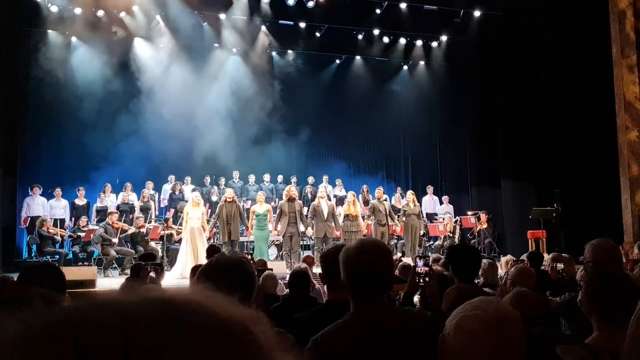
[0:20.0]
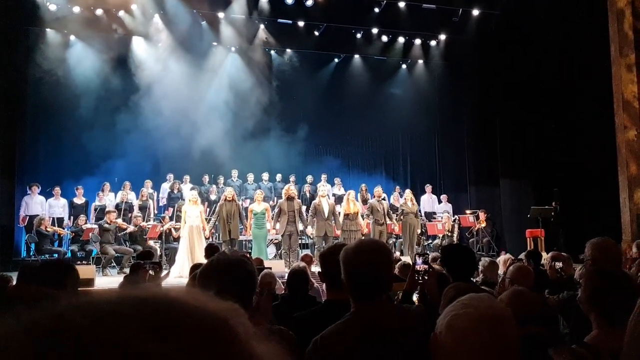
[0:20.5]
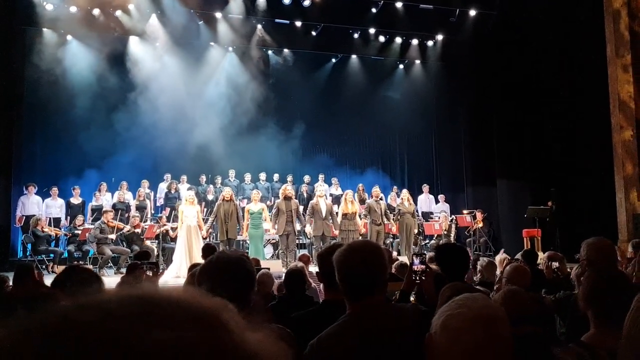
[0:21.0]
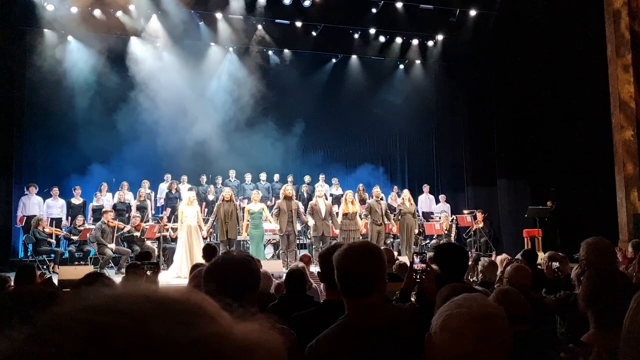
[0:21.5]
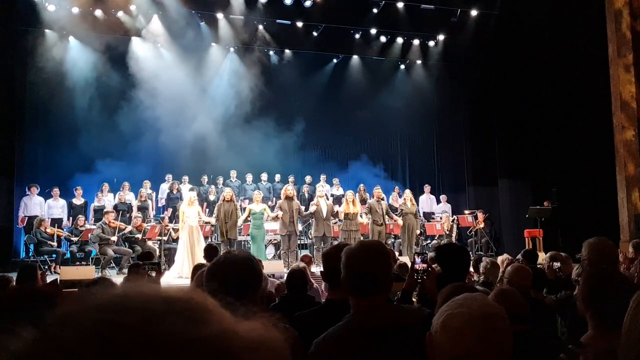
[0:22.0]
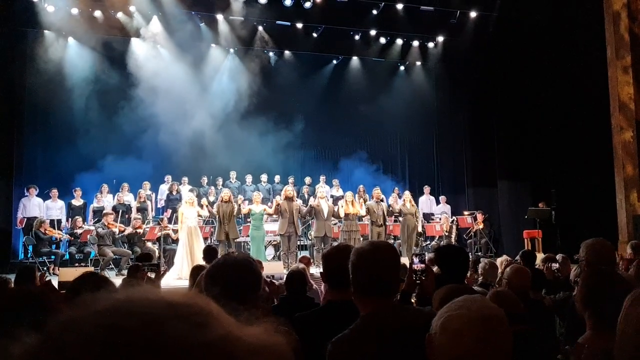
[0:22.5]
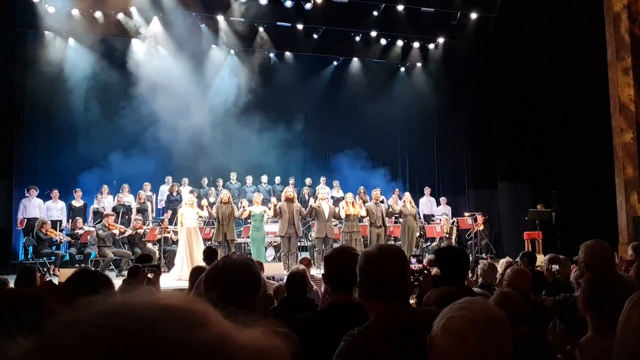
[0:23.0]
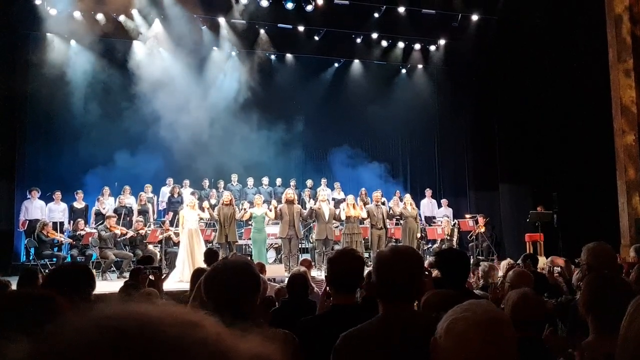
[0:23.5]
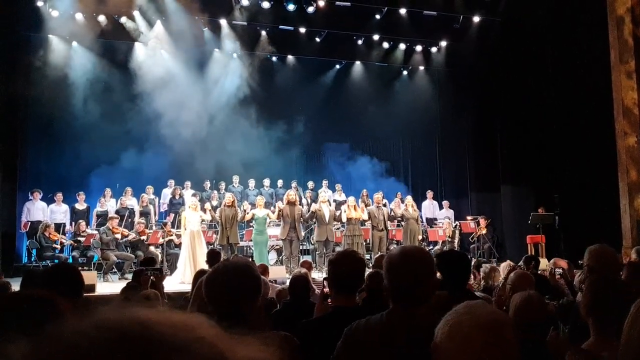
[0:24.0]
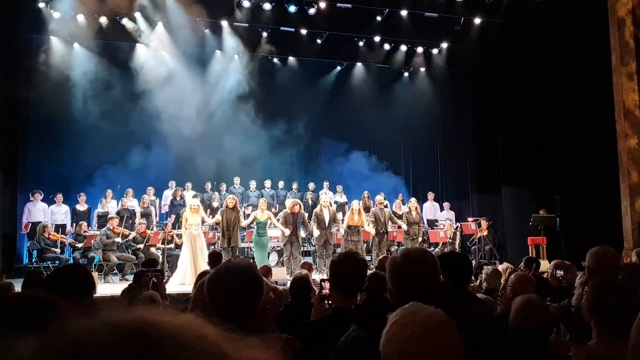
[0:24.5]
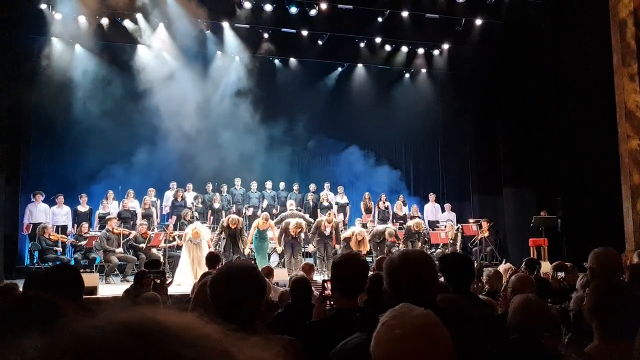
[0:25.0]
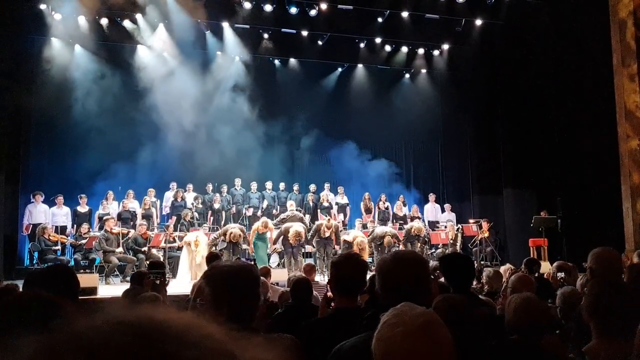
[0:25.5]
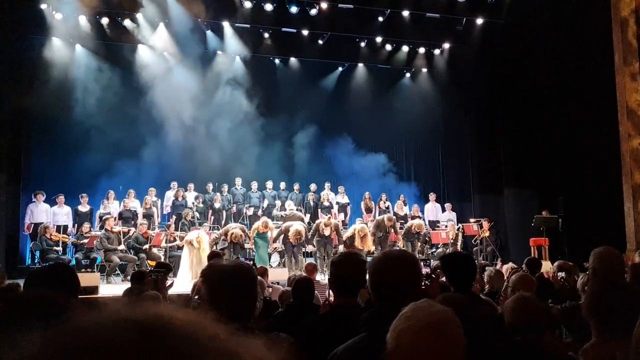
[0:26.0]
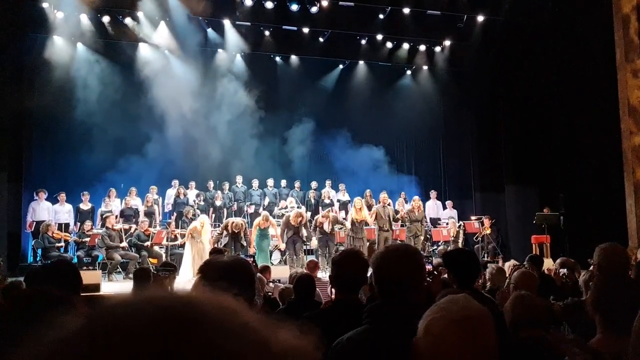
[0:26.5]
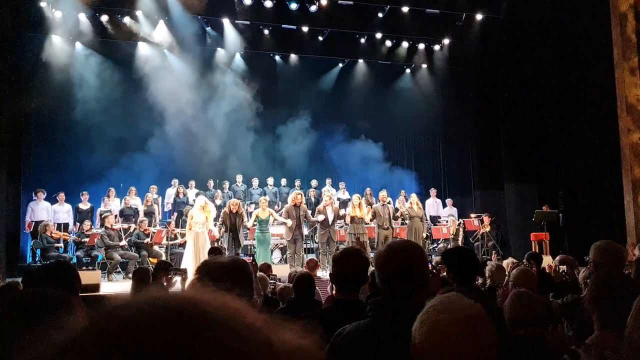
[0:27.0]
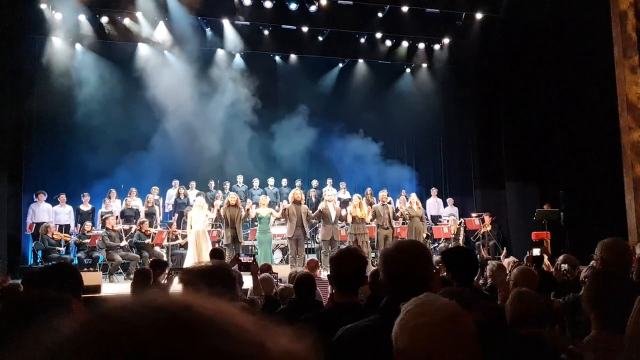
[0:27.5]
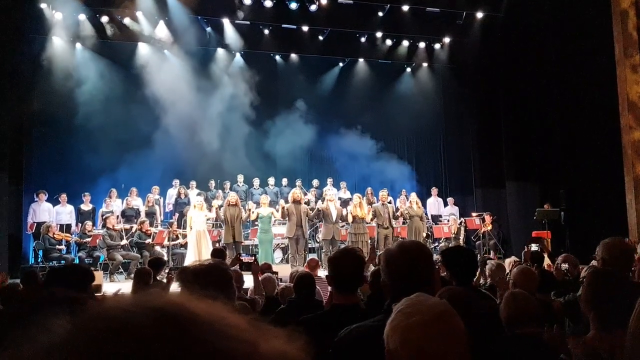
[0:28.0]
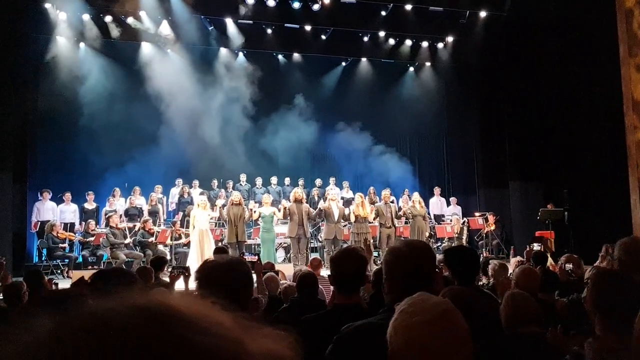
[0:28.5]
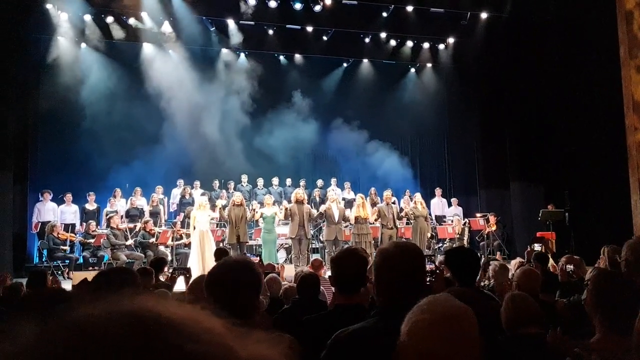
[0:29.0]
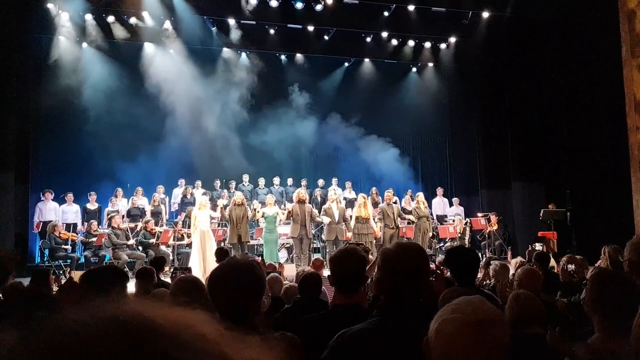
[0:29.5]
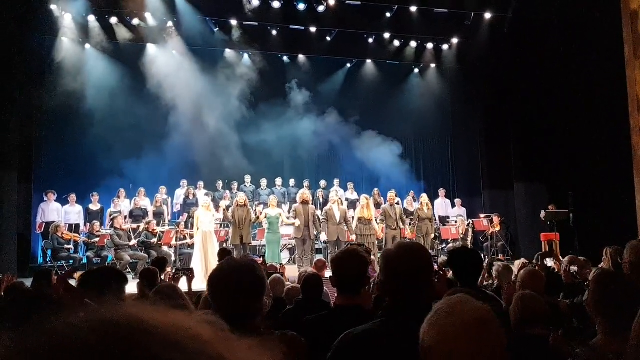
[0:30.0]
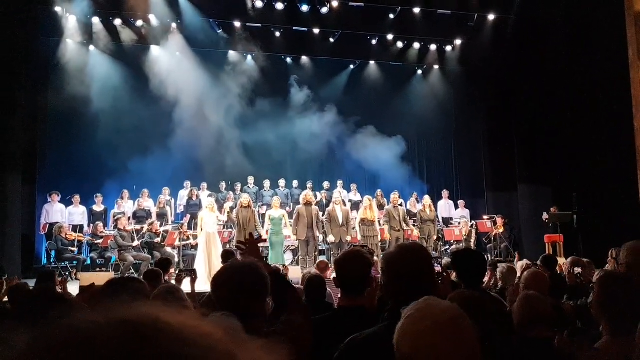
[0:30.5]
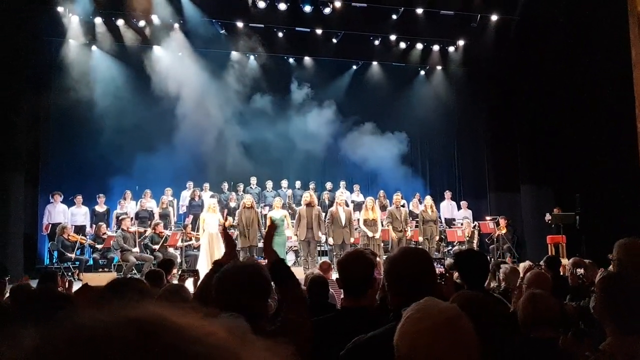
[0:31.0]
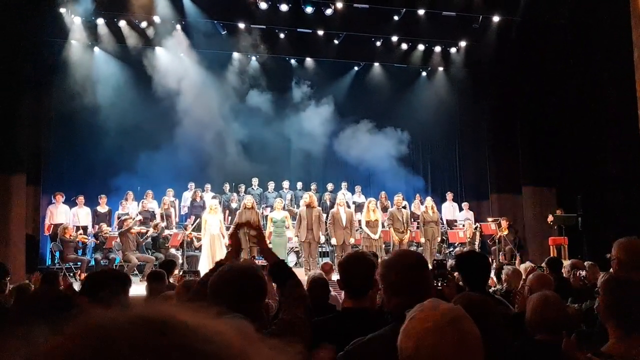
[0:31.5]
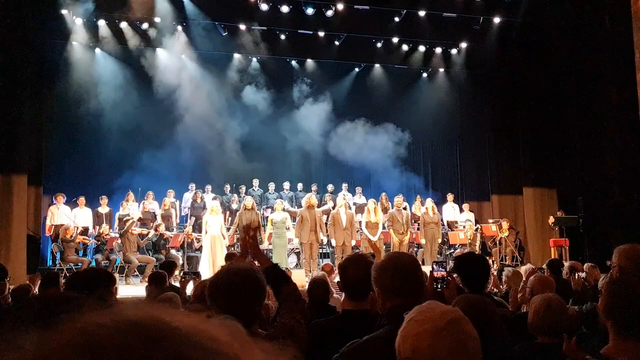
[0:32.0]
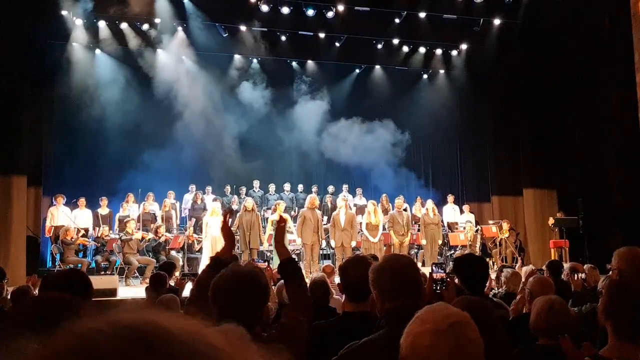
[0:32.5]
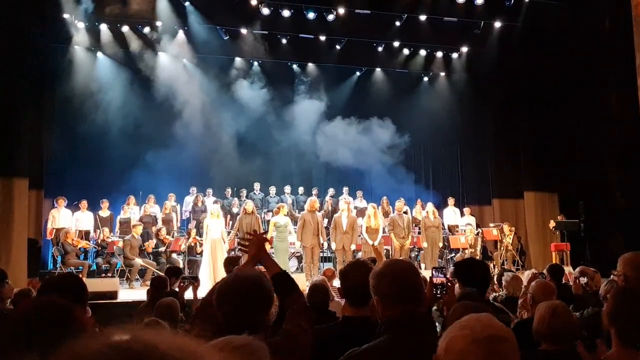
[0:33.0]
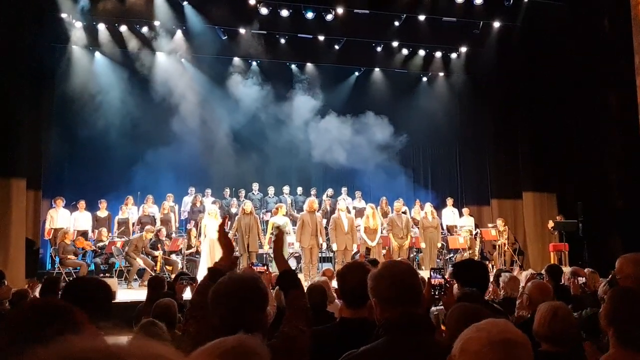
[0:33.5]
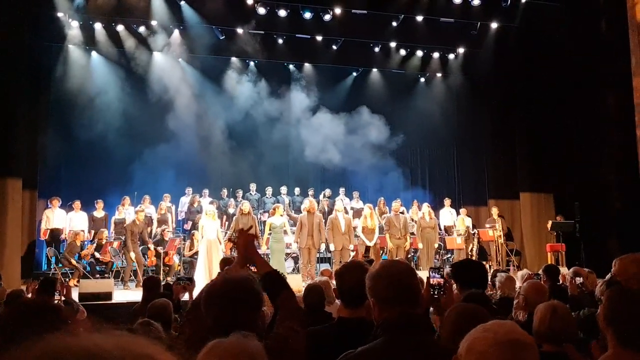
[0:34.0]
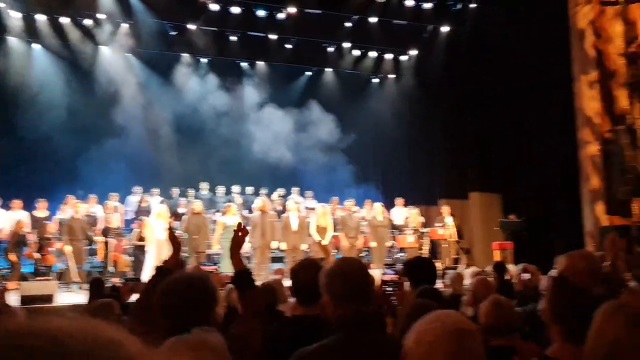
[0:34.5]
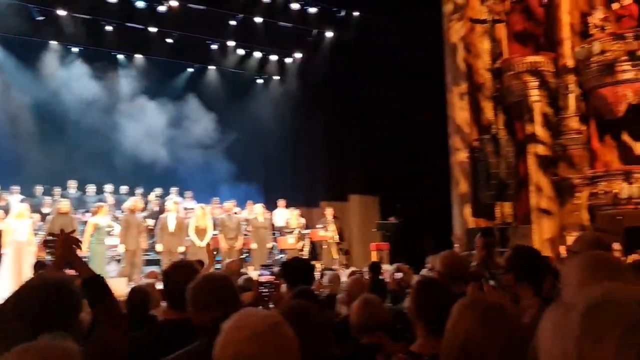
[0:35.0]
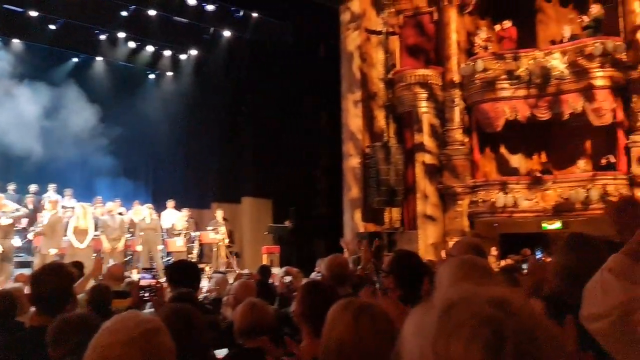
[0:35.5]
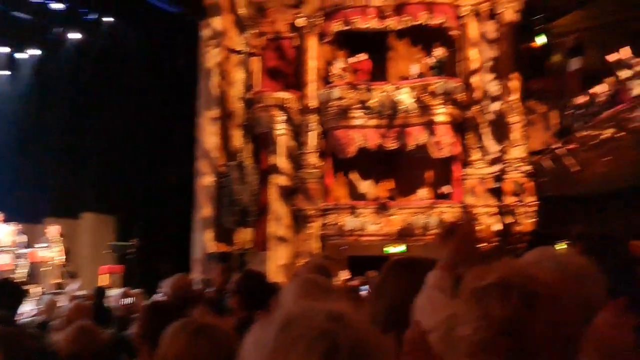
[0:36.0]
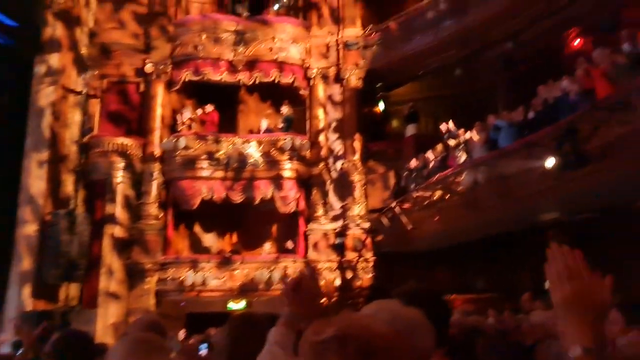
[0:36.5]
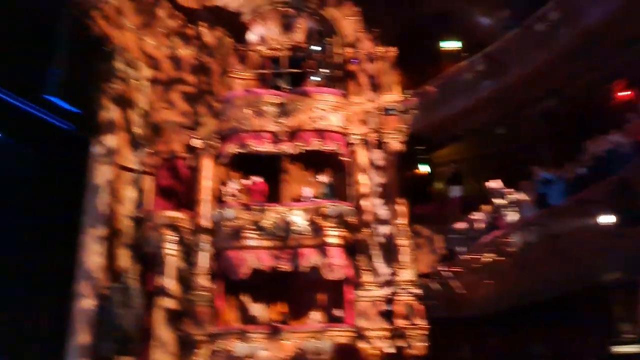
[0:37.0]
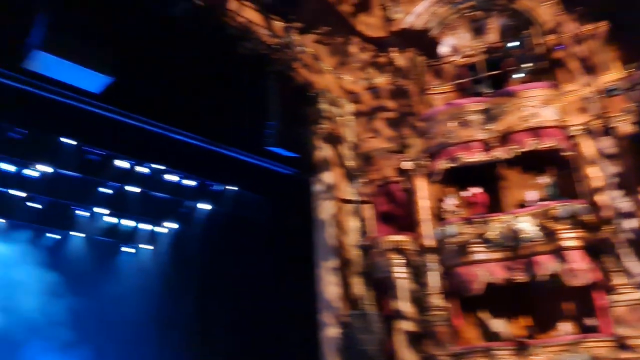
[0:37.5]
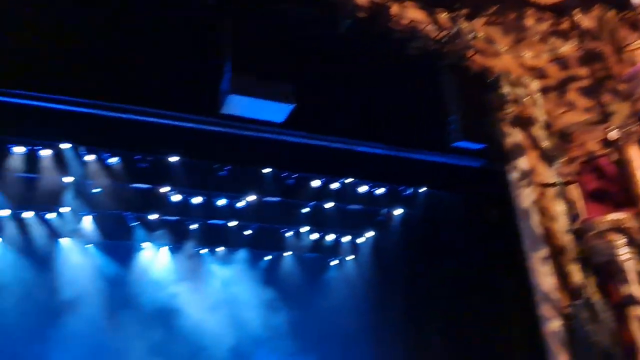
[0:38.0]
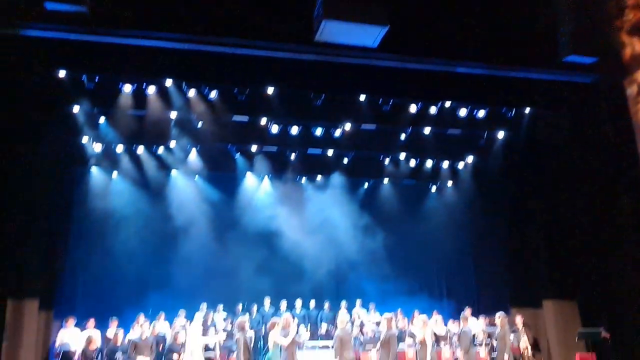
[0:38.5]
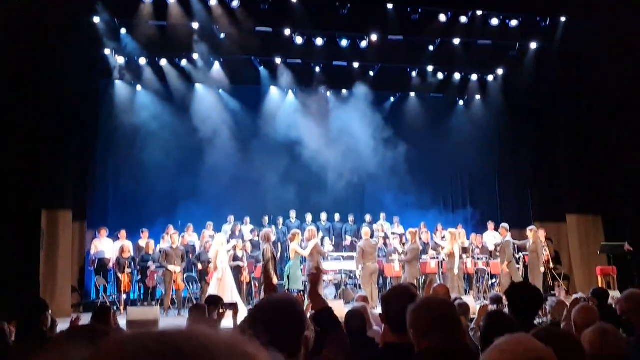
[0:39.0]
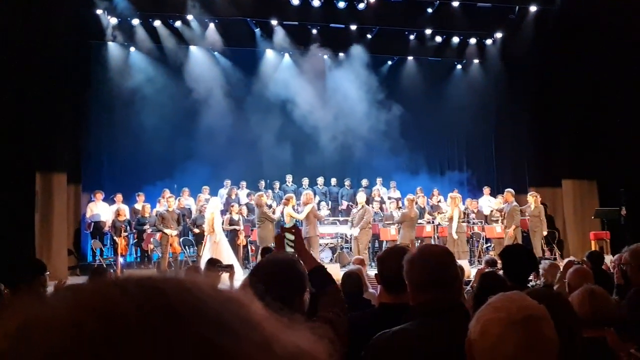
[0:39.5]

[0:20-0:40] The audience claps passionately, with hands raised in the air as they clap. The people appear to be seated, apparently not giving a standing ovation. A conductor is still conducting while the musicians are still performing. The people at the front are holding hands; they are possibly soloists or members of quartets or a group that sang, and they are being recognized. The concert hall looks very ornate.